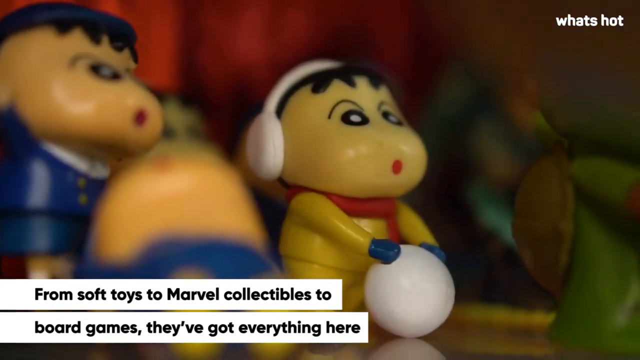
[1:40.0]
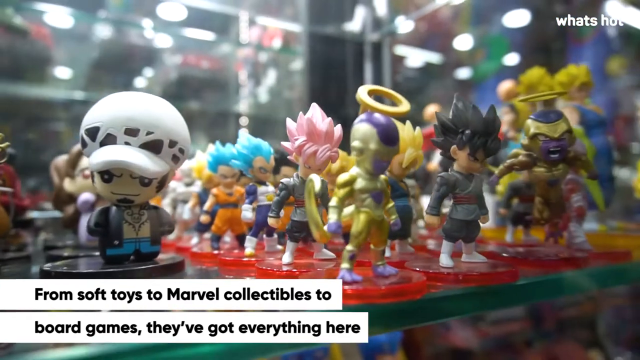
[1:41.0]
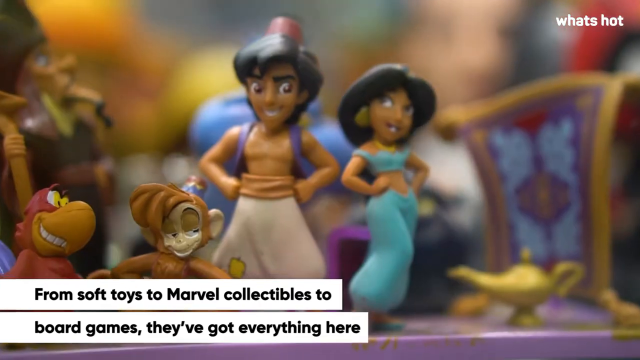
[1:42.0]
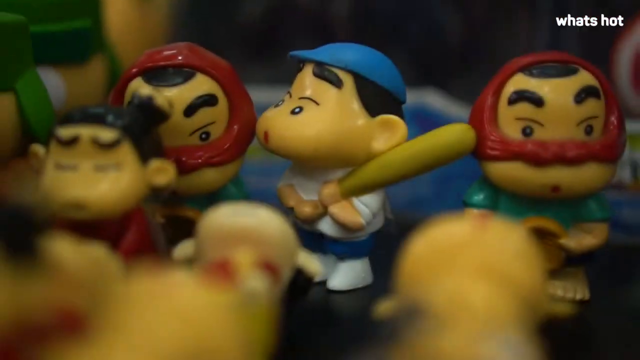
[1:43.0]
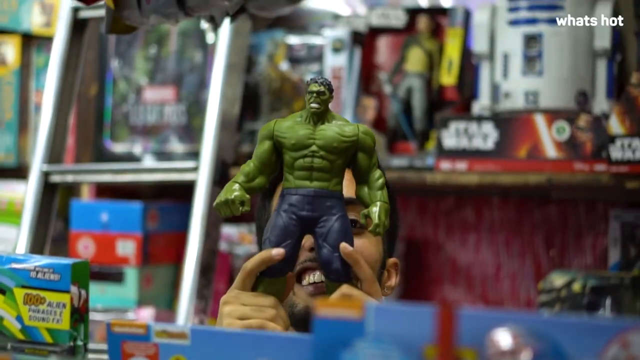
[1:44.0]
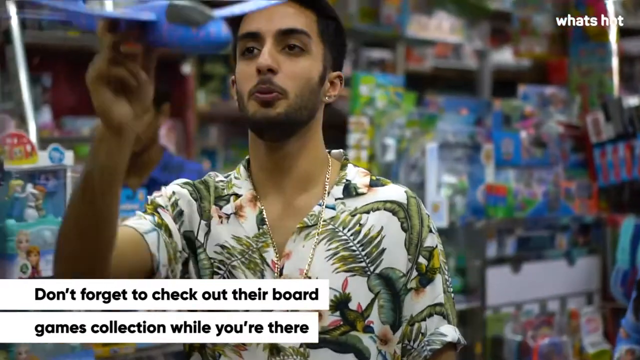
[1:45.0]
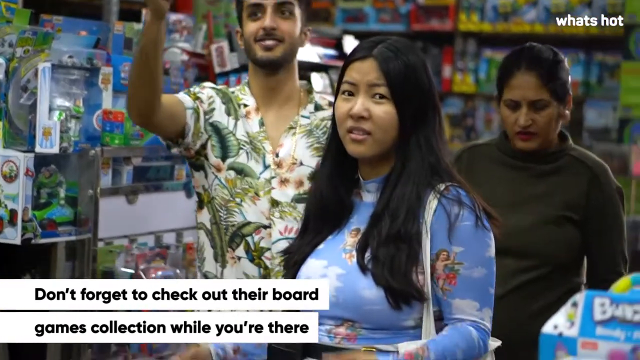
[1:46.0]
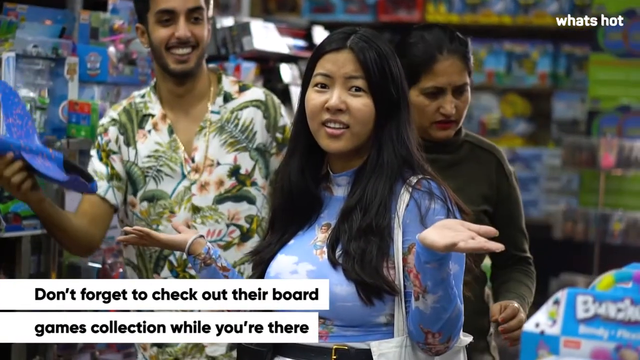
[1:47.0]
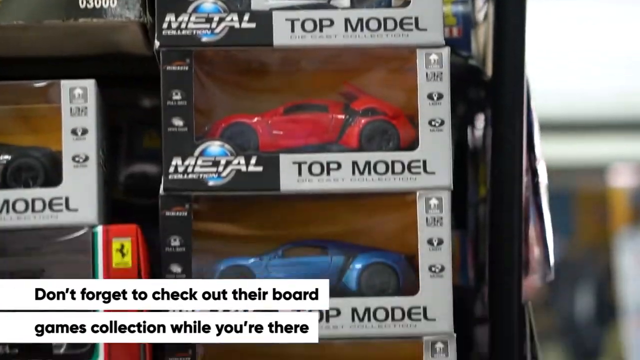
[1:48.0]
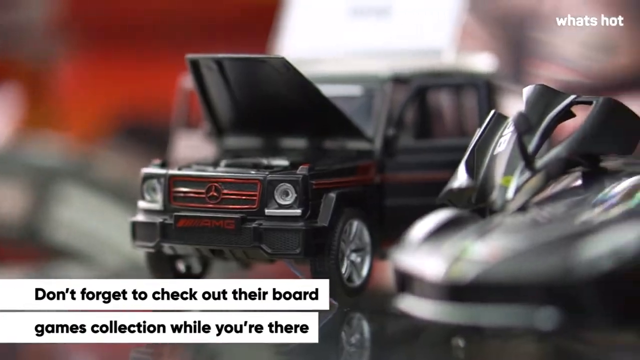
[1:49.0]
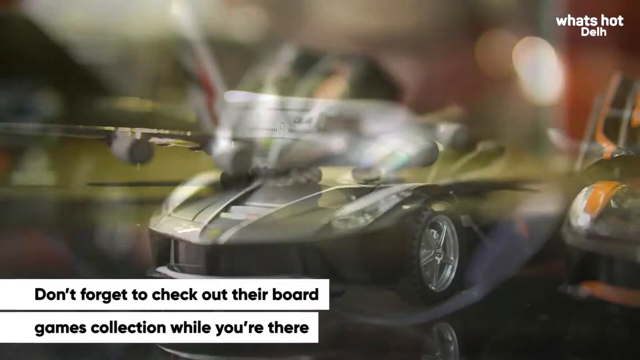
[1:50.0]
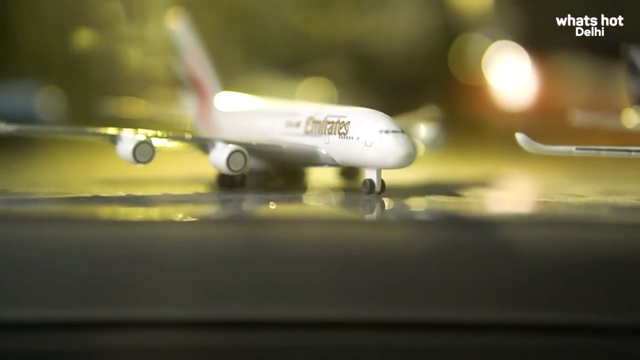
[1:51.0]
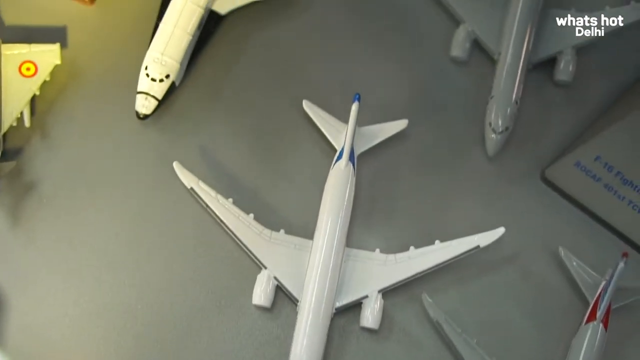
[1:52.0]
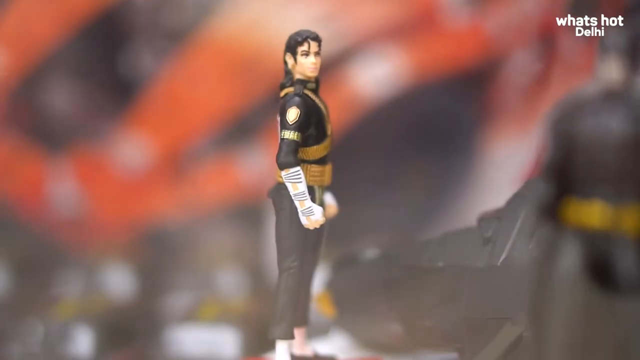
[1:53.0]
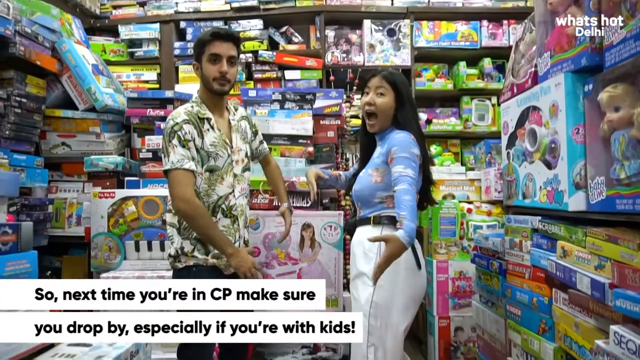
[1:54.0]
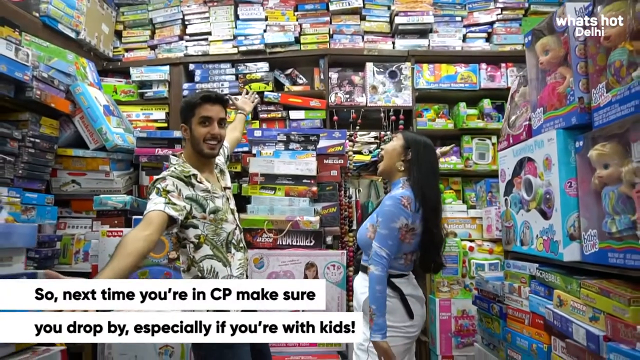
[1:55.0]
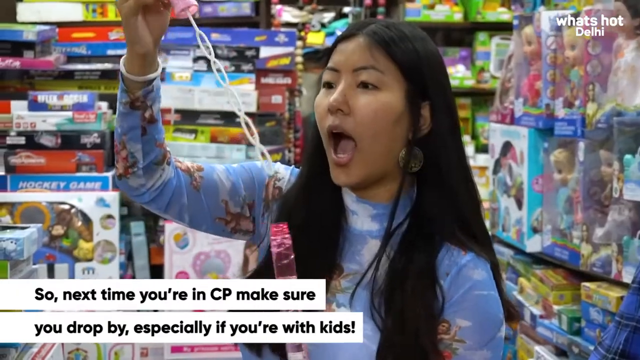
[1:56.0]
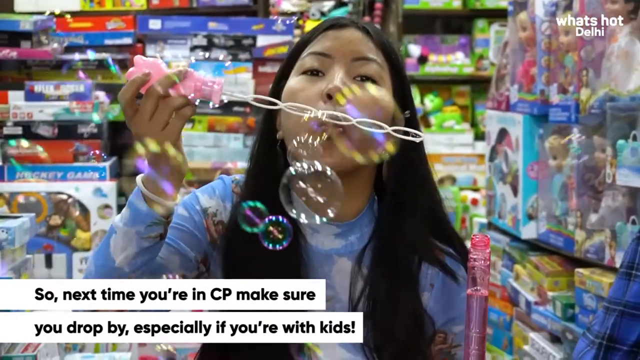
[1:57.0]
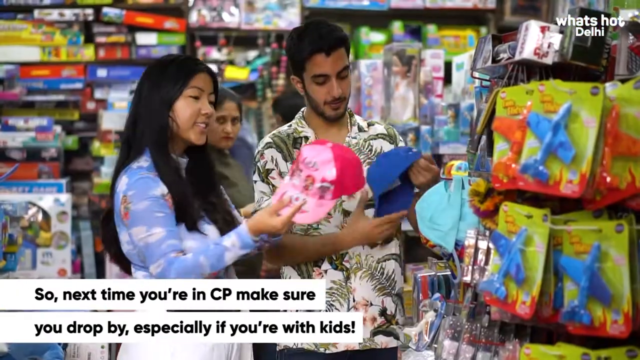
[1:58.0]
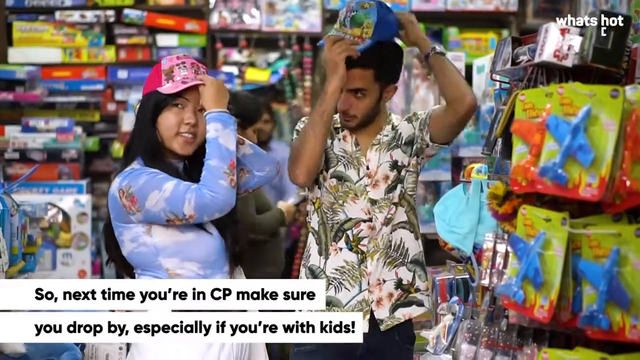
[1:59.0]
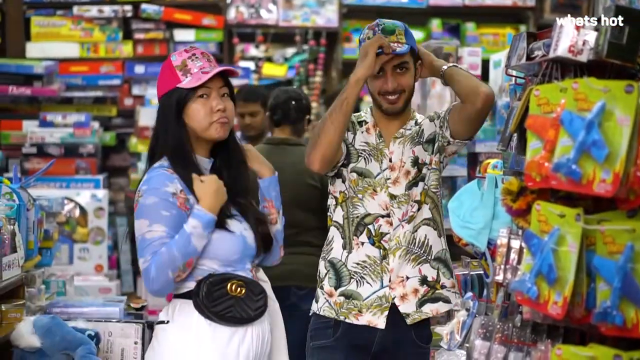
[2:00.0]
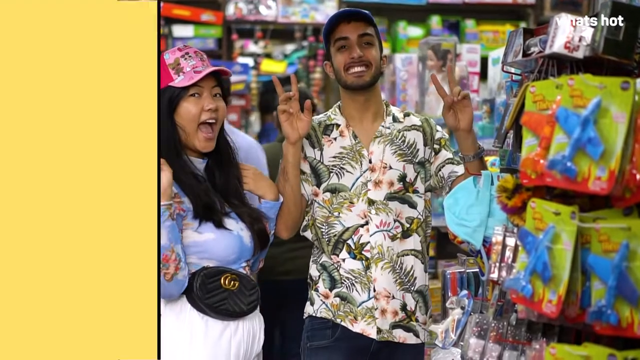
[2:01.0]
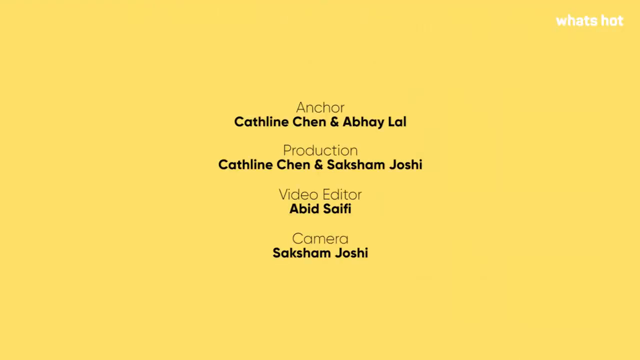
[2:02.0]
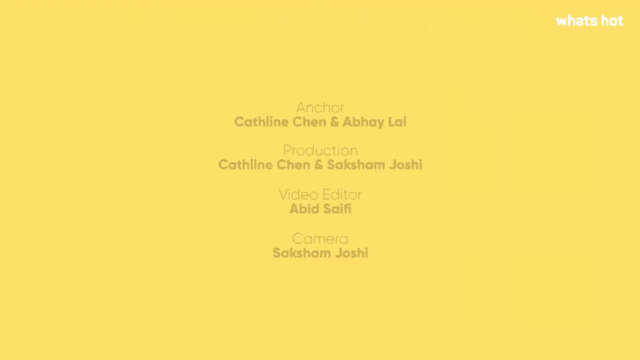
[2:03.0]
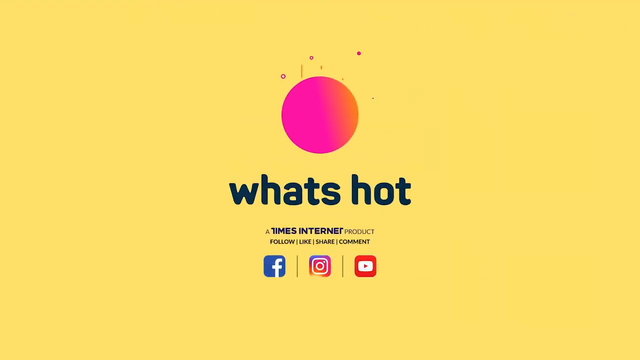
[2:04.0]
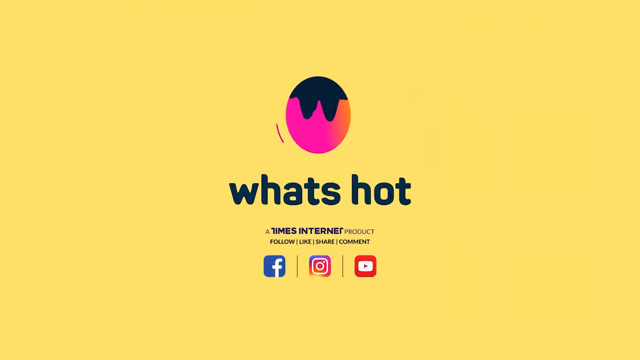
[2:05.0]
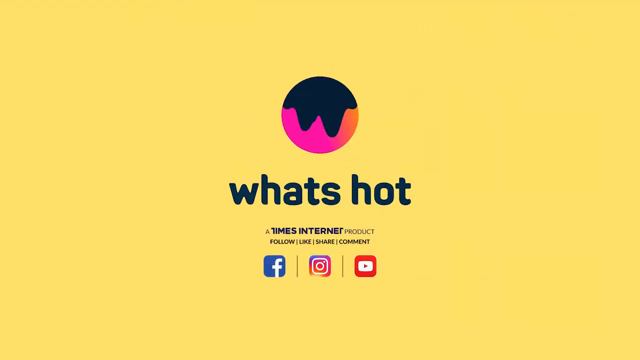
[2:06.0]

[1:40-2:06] The two seem to be checking out different varieties of toys, hundreds of them. Text at the left says "Don't forget to check out their board game collections while you're there". The store seems to be in India, with Indian people all around. Credits then list Cateline Chen as anchor and production, and Saxon Jose as video editor and camera. At the end, "what's hot" and "times internet product" appear, along with "follow like share connect" and their social media.